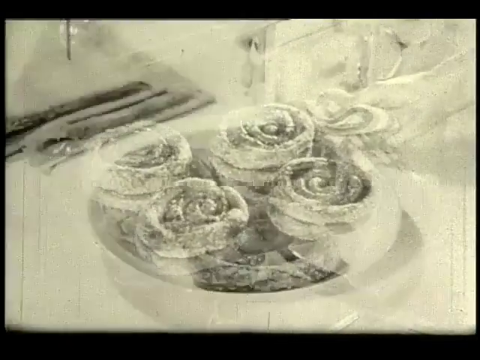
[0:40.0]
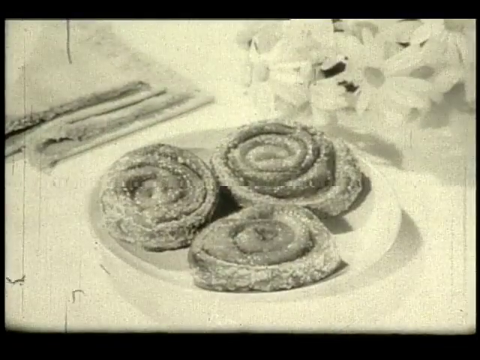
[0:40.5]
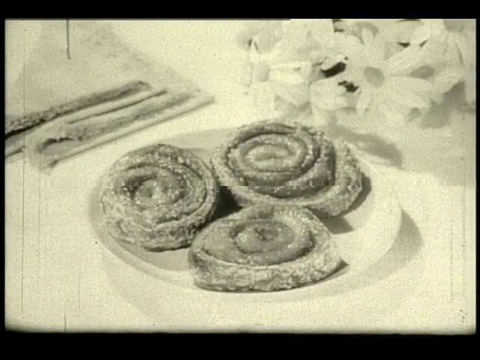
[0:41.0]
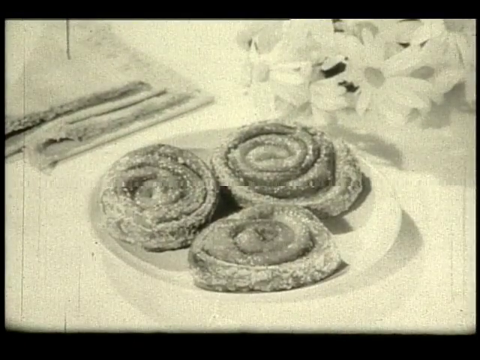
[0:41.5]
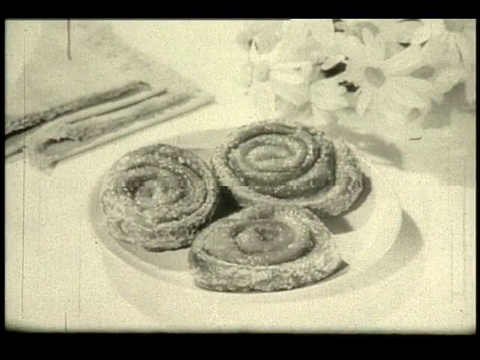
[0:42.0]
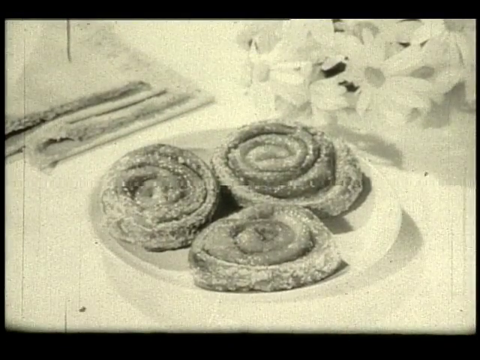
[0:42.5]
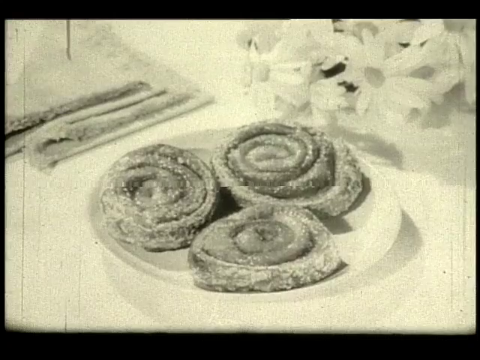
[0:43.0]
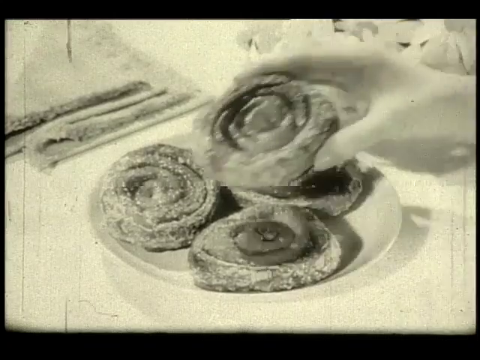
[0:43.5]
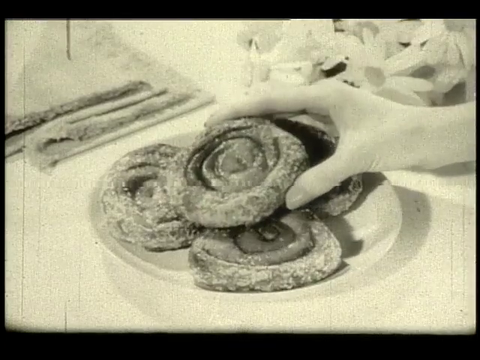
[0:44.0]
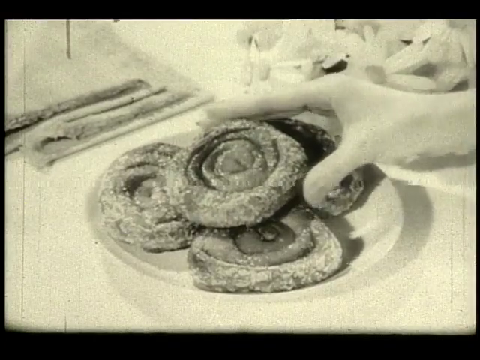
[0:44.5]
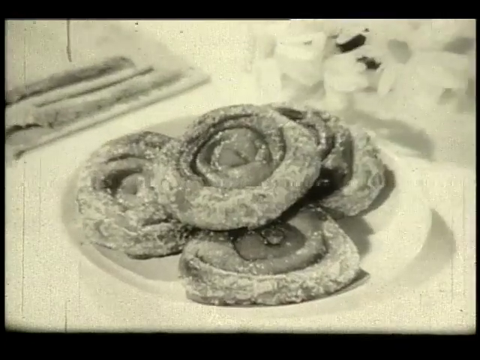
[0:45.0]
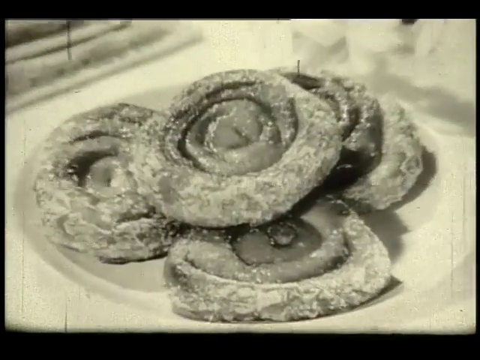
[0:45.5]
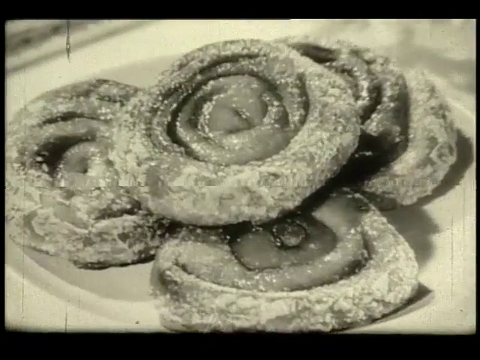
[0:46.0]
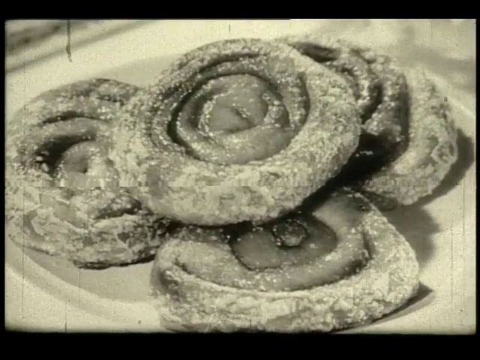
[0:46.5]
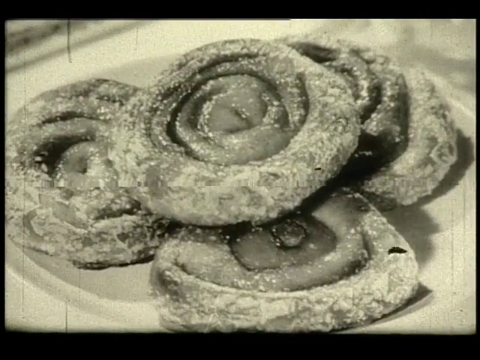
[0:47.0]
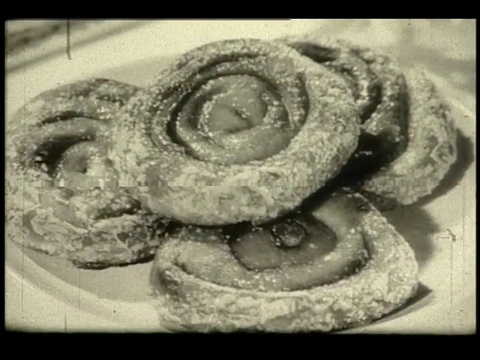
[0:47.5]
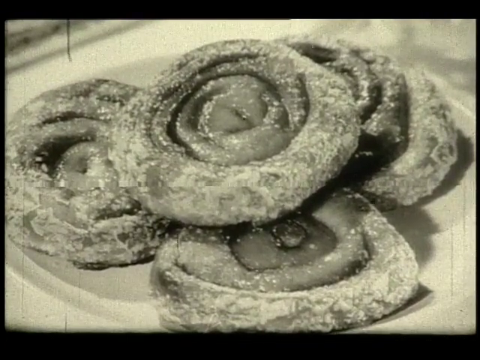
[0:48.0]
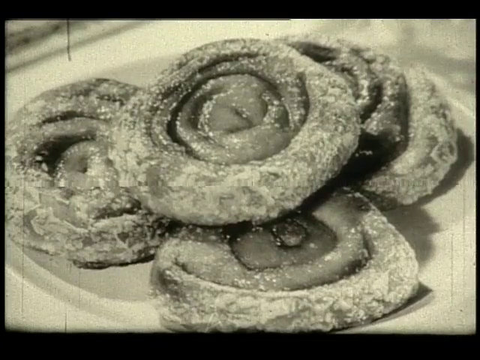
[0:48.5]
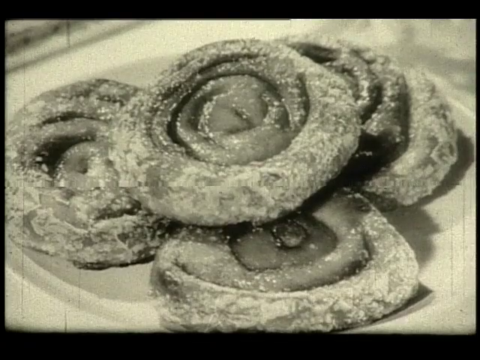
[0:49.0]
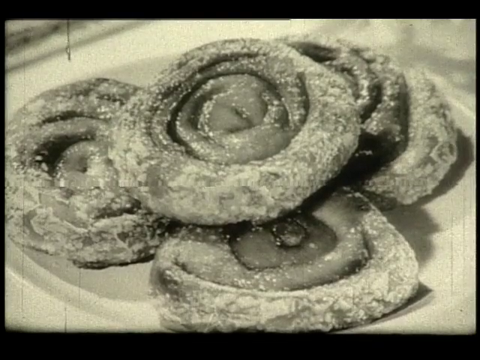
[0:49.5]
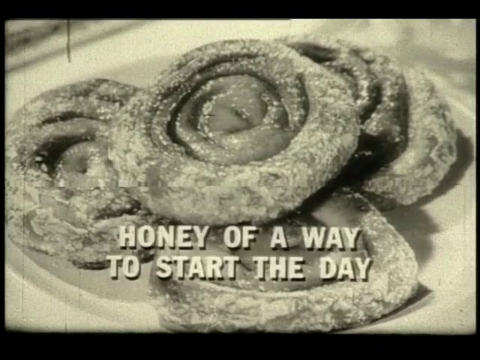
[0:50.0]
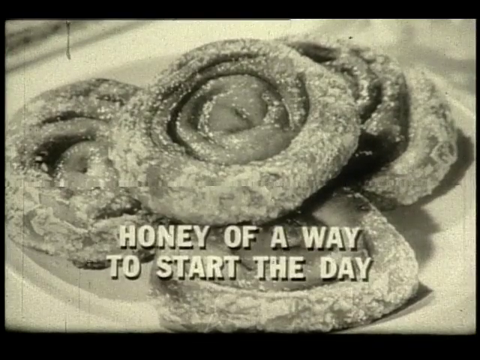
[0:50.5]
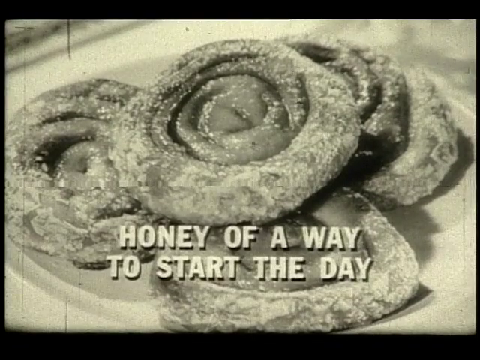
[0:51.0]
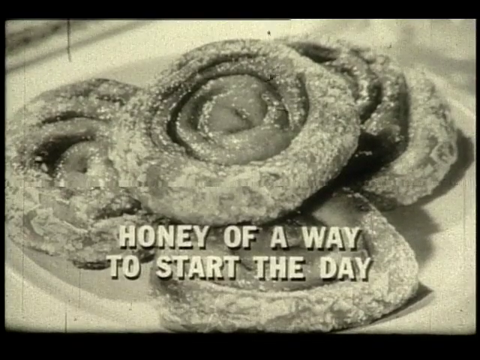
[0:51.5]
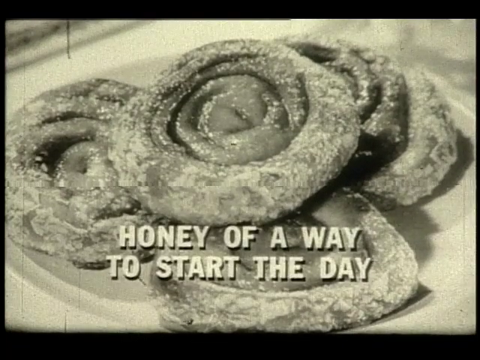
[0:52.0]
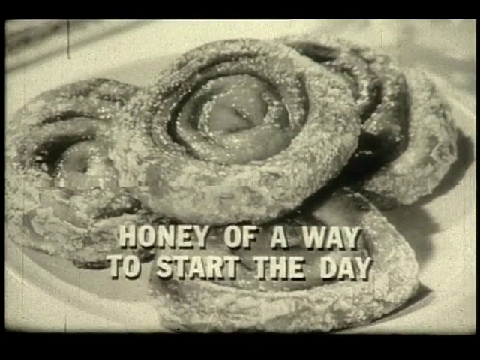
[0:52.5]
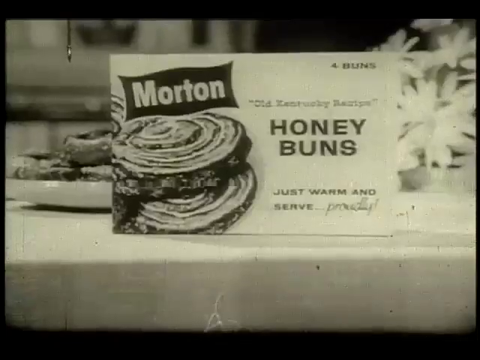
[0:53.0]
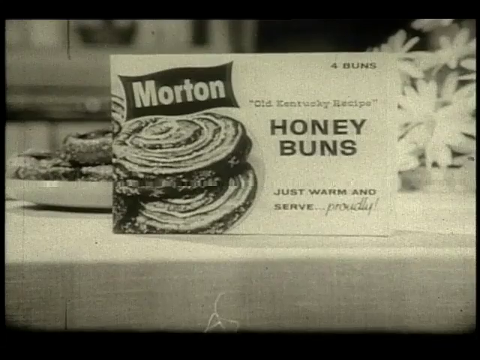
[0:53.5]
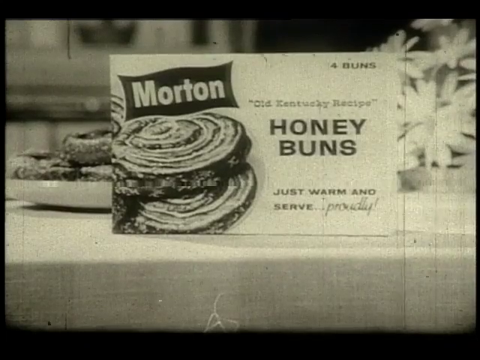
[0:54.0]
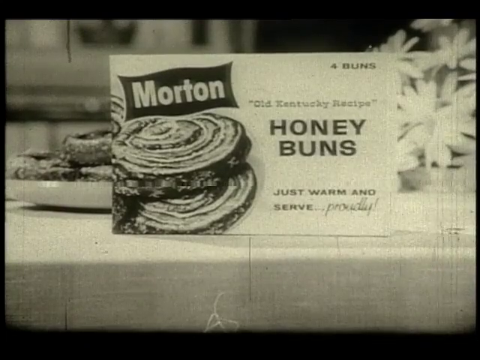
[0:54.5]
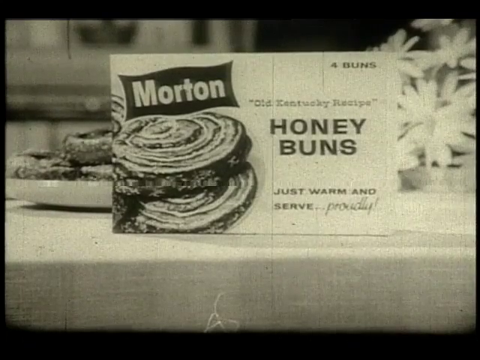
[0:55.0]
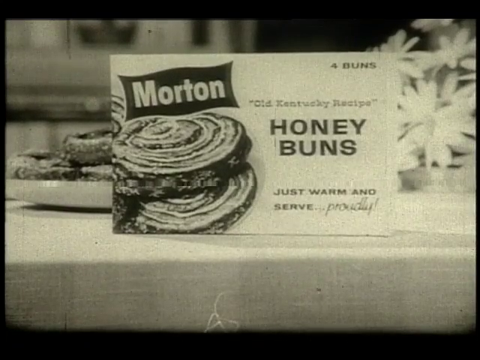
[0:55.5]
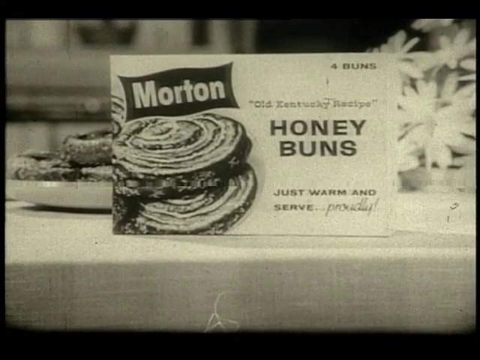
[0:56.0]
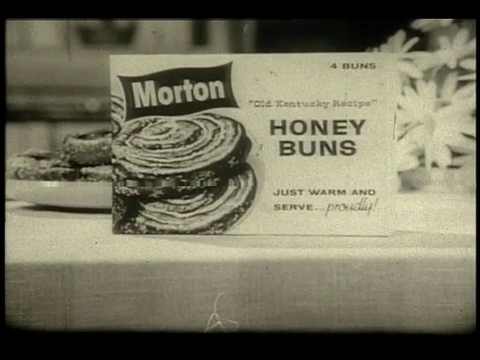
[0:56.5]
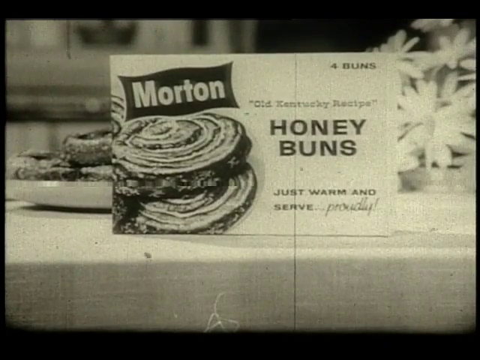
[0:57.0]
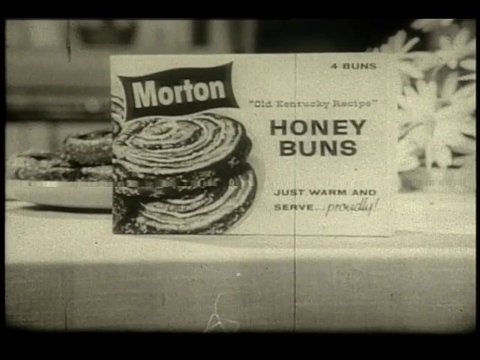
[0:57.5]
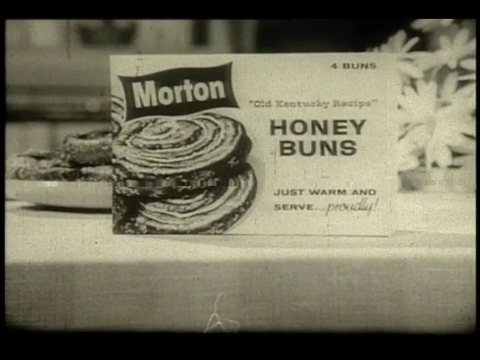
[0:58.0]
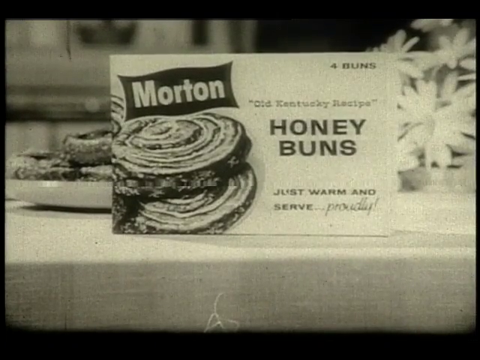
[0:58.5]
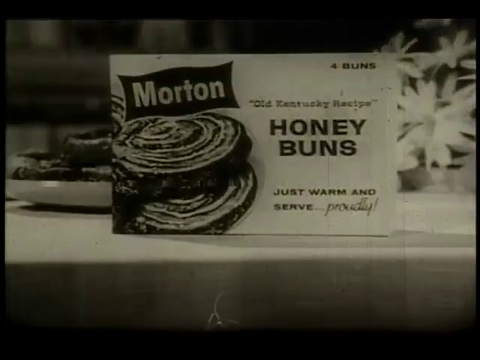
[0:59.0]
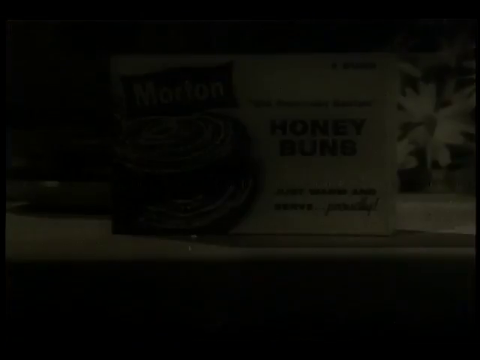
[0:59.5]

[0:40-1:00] In a black-and-white, kind of retro style, honey buns are shown with a background and some flowers. They seem to have almost an outer glaze or sugary topping, and they are placed on a plate, kind of stacked on top of each other. Text on the screen says "honey of a way to start the day." A hand places the honey buns on the plate; no other people appear. The scenes rotate between a few settings showing the honey buns. The Morton advertisement ends with the Morton box and the honey buns displayed, then fades out to a black screen.